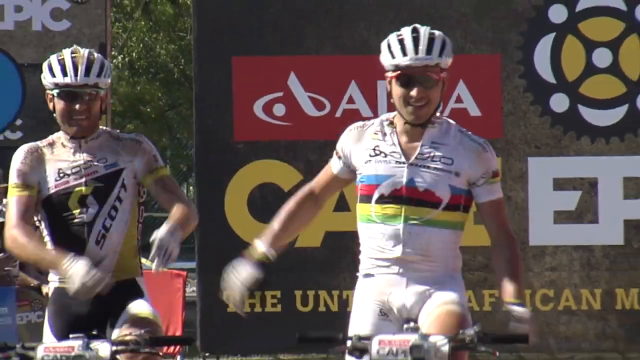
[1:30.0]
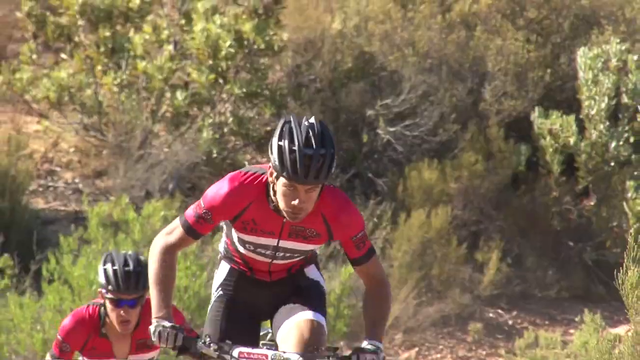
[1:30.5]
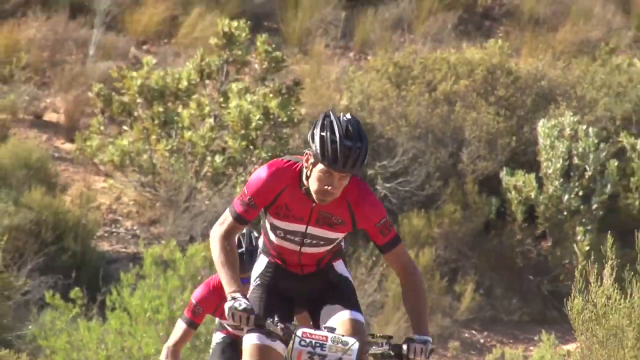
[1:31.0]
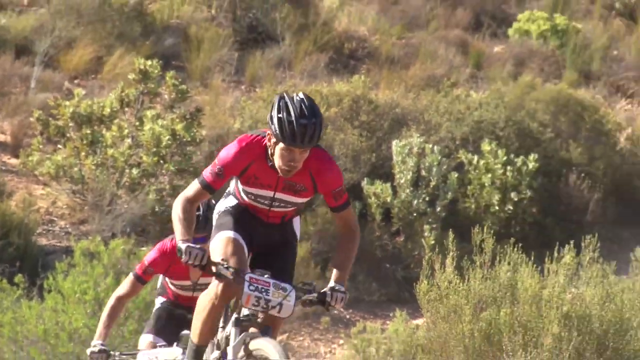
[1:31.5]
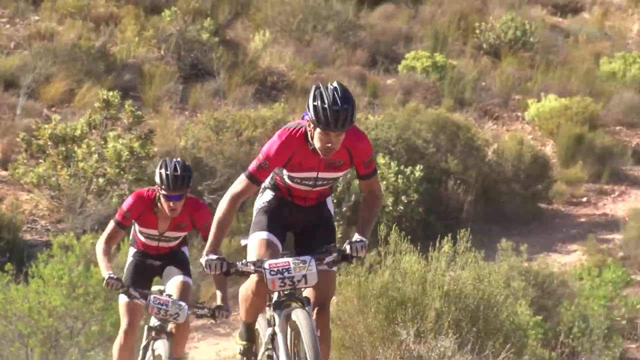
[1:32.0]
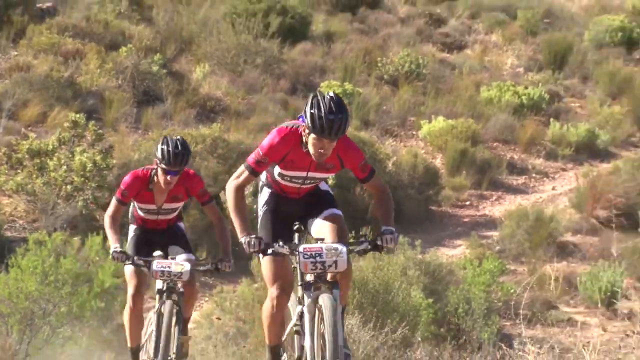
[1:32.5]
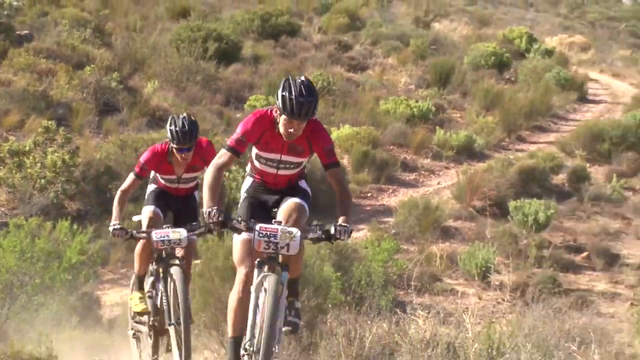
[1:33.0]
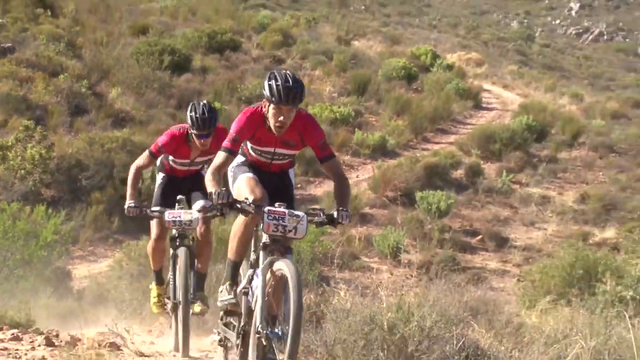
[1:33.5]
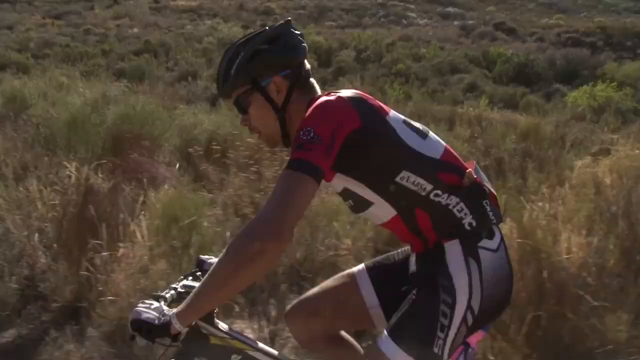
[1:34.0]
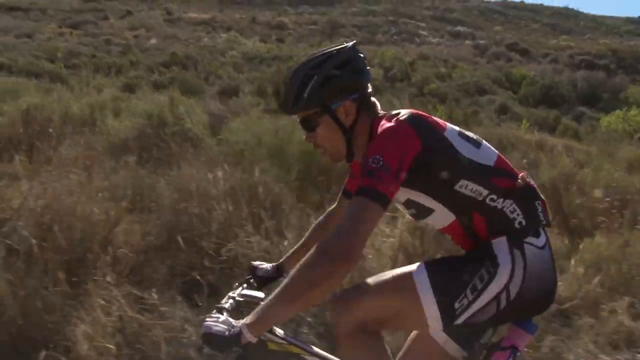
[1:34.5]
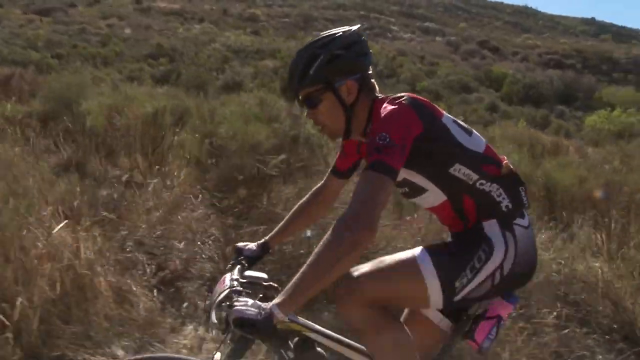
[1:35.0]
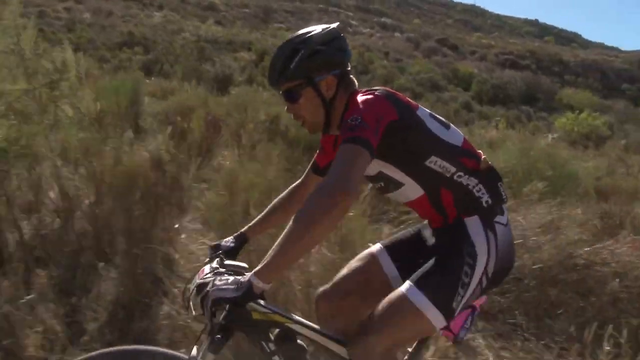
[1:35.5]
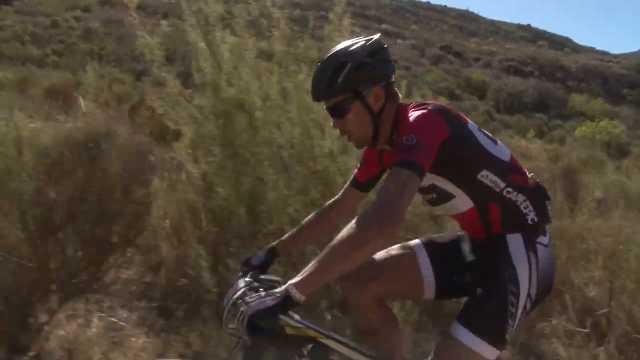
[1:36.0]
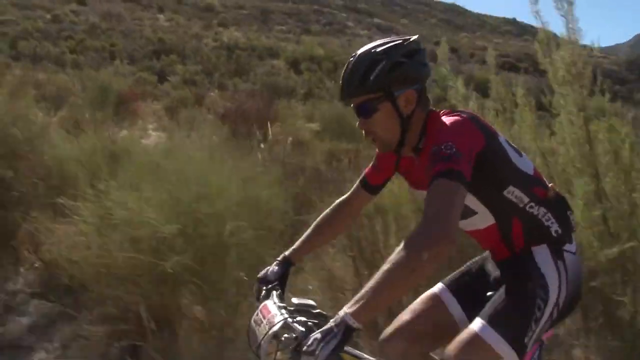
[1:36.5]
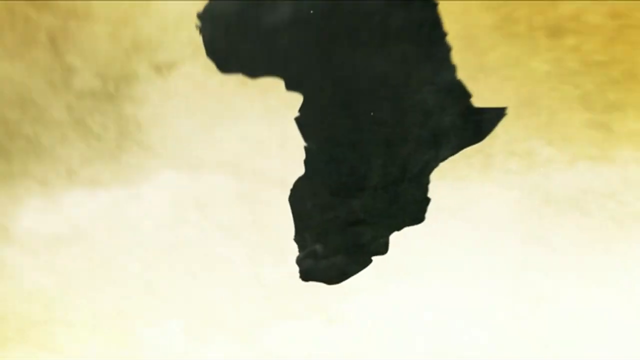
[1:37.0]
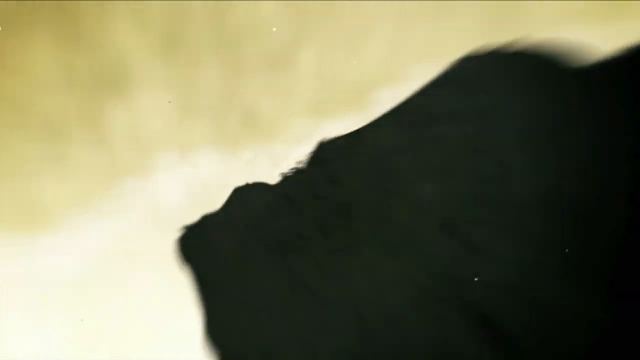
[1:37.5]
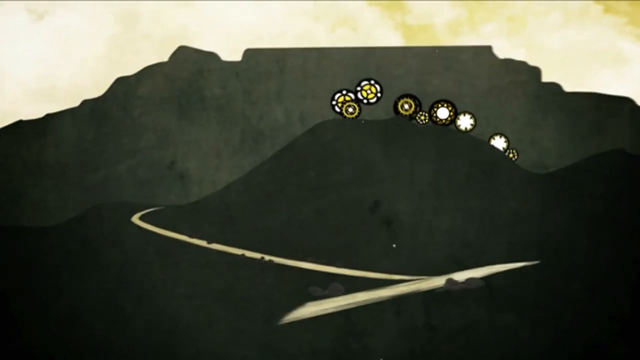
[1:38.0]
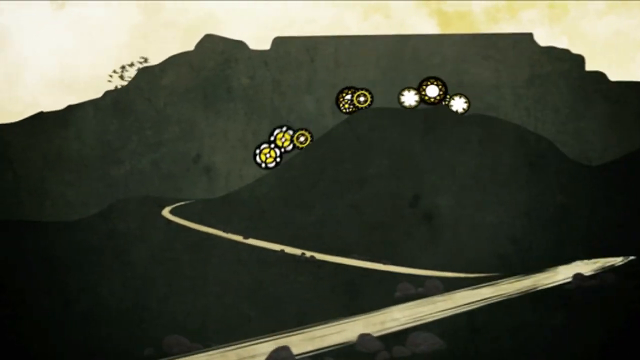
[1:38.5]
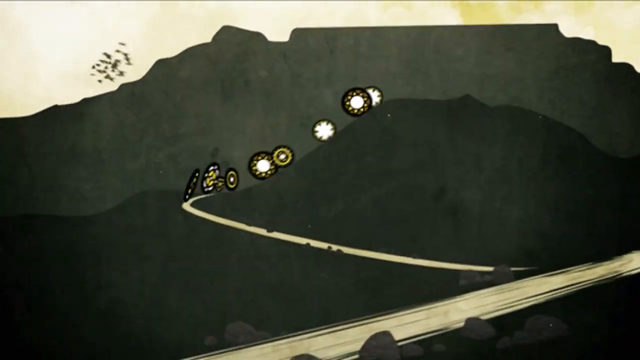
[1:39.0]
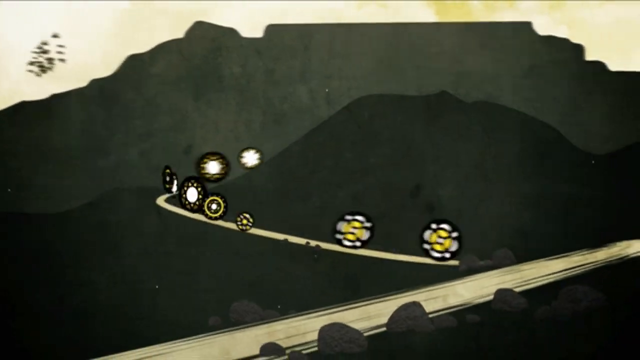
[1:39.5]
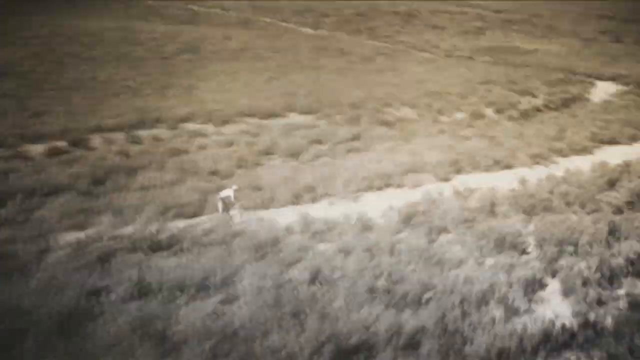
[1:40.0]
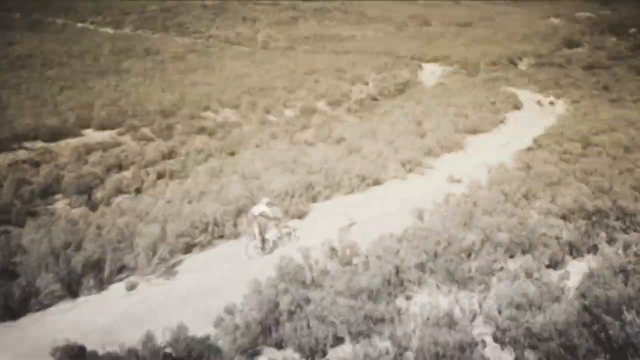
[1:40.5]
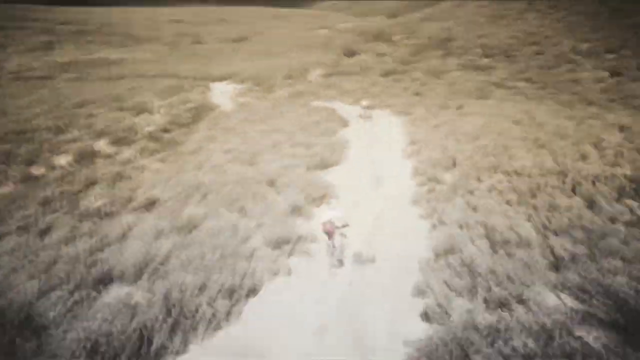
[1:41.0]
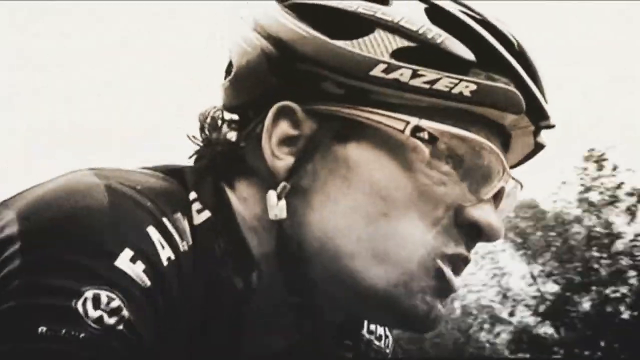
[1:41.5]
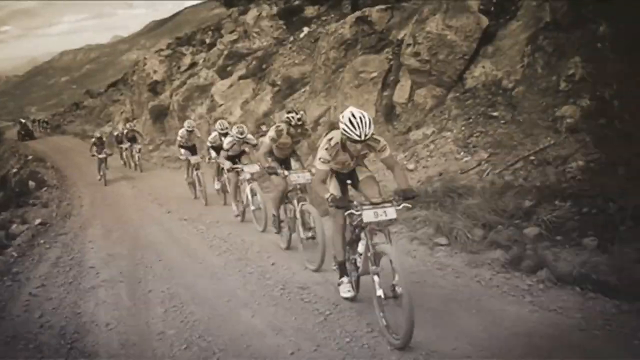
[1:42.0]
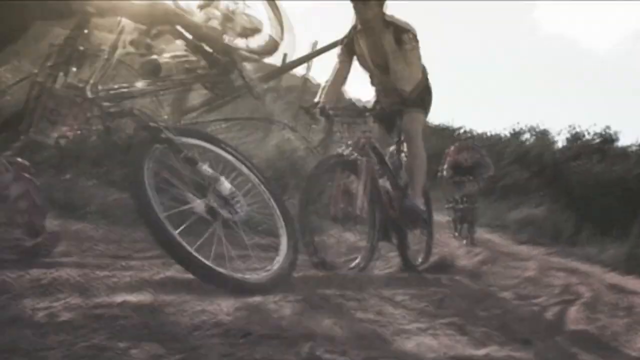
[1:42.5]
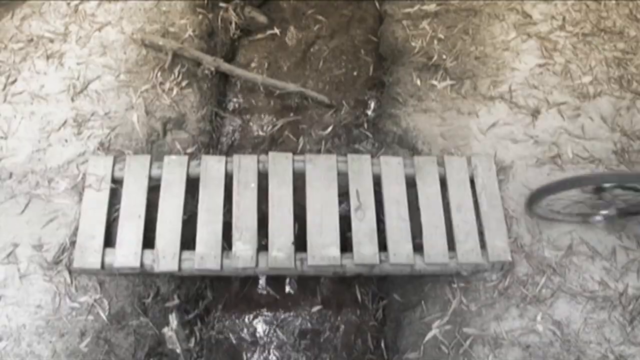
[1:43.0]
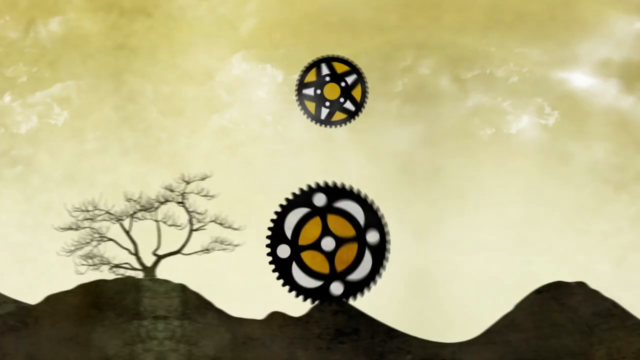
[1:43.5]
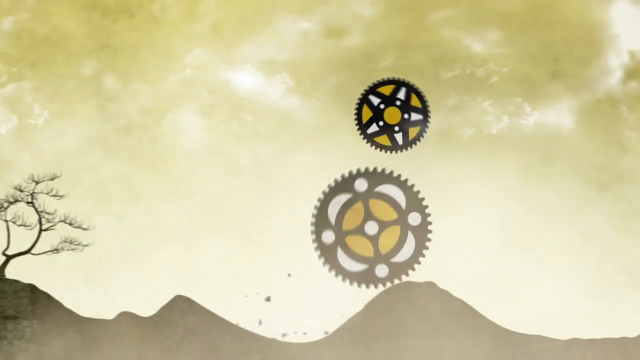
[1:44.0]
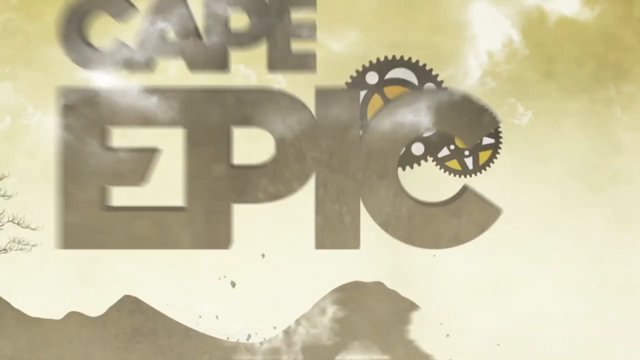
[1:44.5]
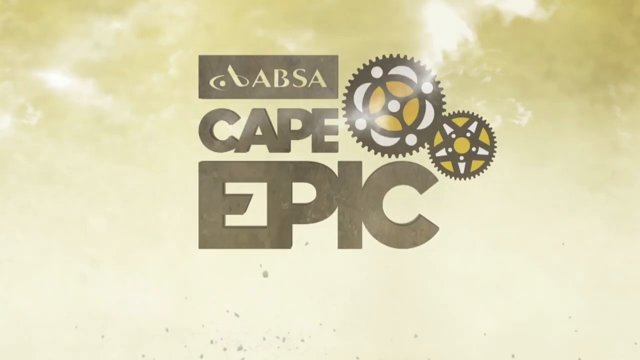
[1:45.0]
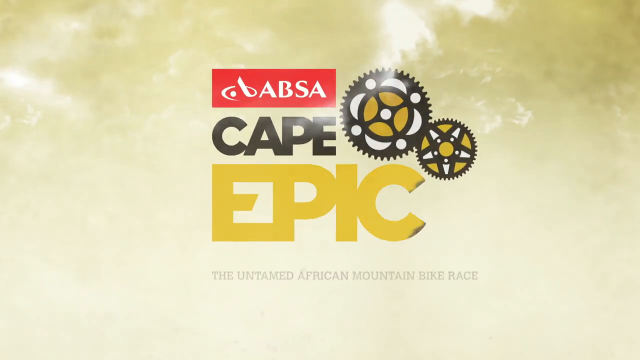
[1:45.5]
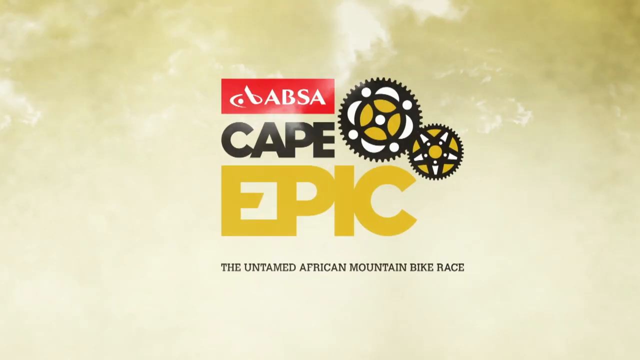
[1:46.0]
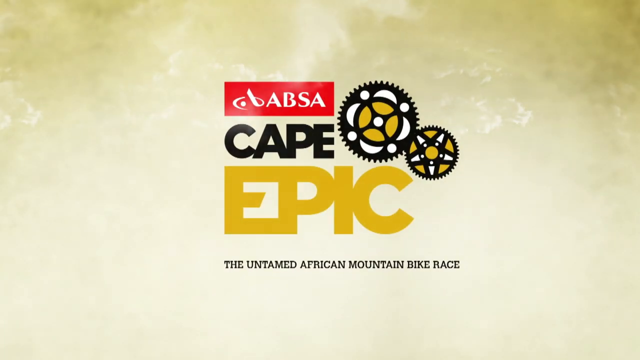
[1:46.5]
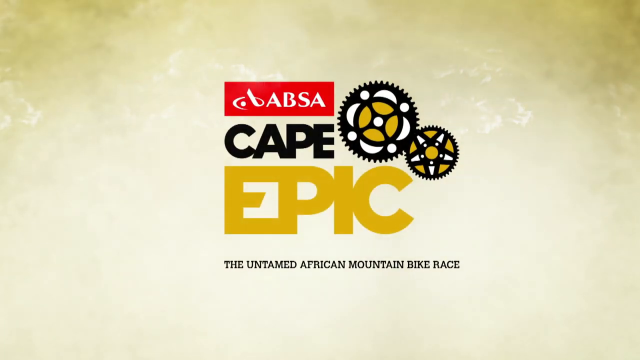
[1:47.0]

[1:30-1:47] Two cyclists are shown. The one on the right wears white shorts and a white top with stripes colored blue, red, black, yellow and green from top to bottom along the center. The cyclist on the left side of the screen wears a white top with black and yellow trim and the word "Scott" in black text on the front. They ride their bikes without their hands on the handlebars. Next, another cyclist apparently pumps his bike up a hill, wearing a red top with black and white trim, black shorts with white trim and a black helmet. Right behind him is another cyclist in the same top and shorts. The front cyclist has the number 33 on a little tag on the front of his handlebars. Lots of tumbleweed-type brush is all over behind them, with a dirt trail running through it.